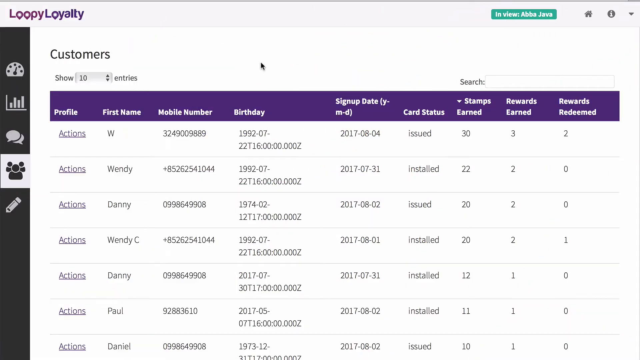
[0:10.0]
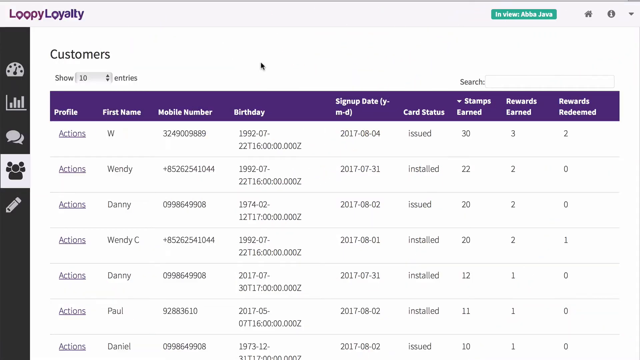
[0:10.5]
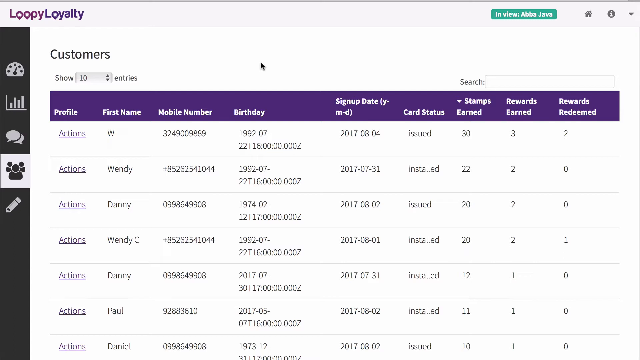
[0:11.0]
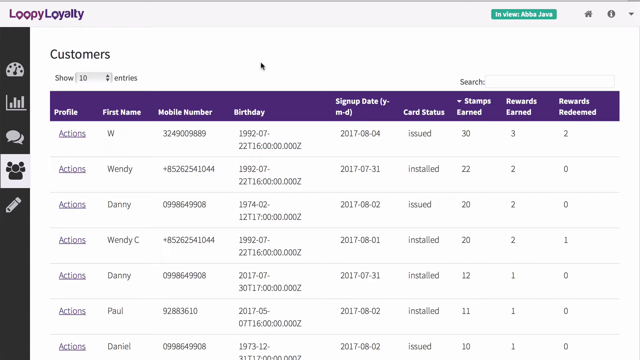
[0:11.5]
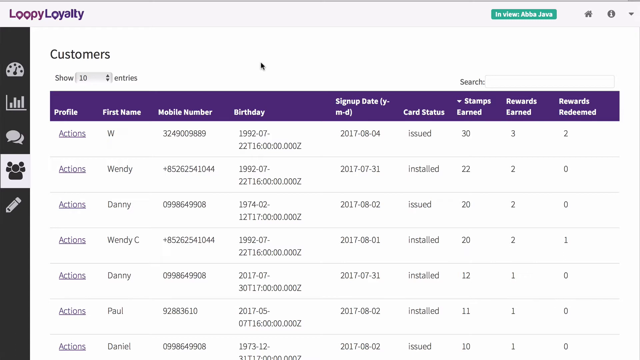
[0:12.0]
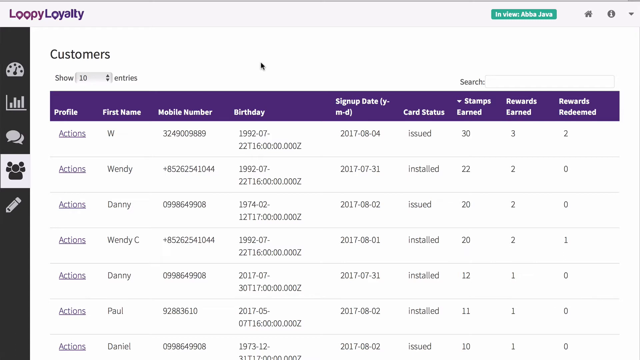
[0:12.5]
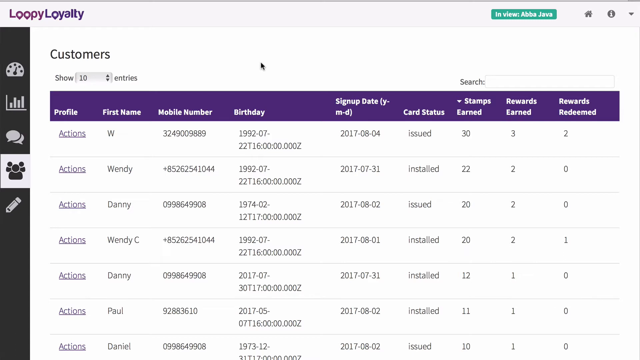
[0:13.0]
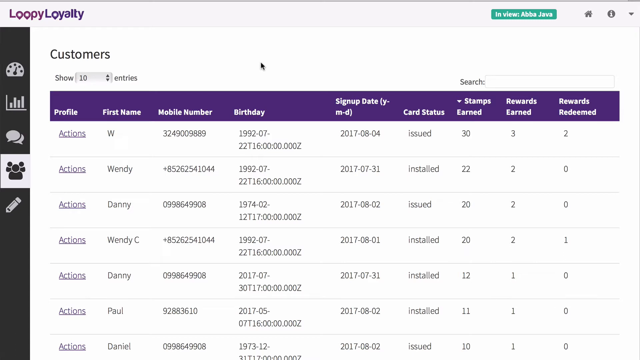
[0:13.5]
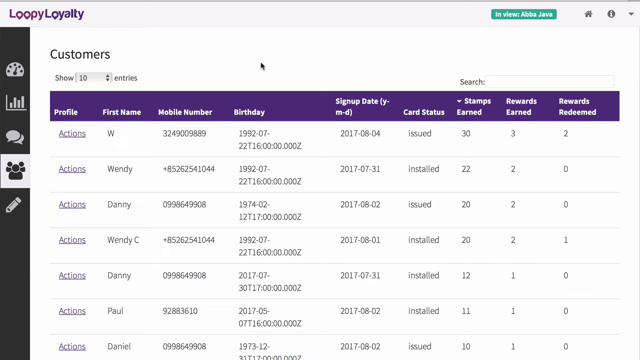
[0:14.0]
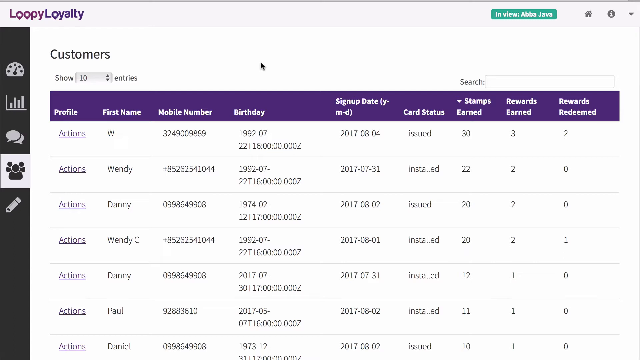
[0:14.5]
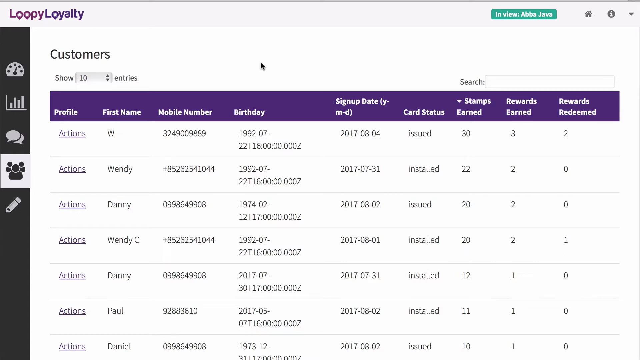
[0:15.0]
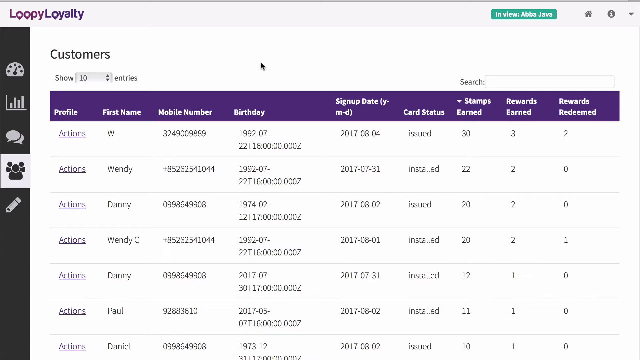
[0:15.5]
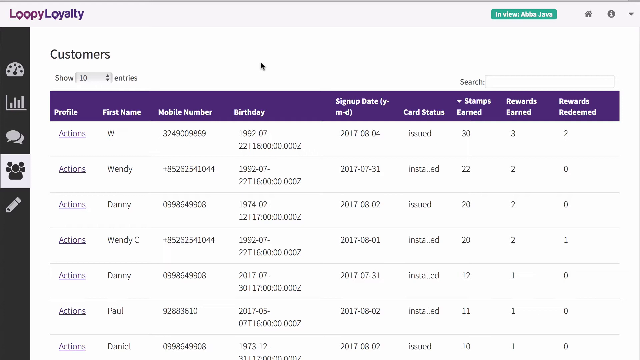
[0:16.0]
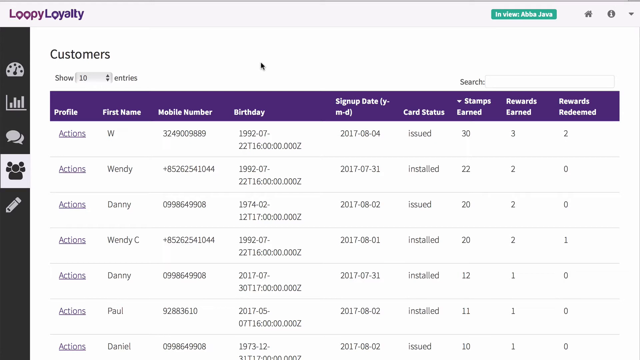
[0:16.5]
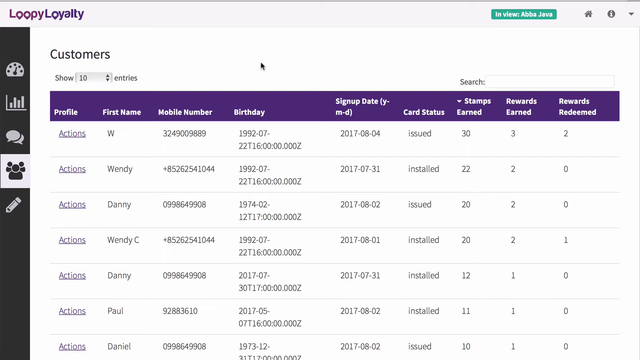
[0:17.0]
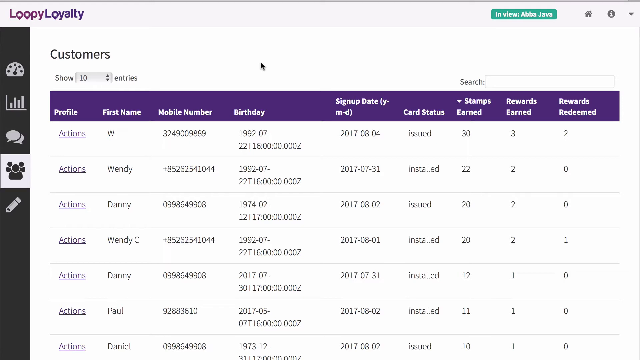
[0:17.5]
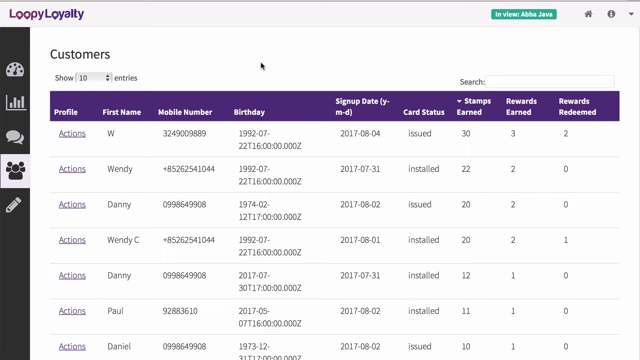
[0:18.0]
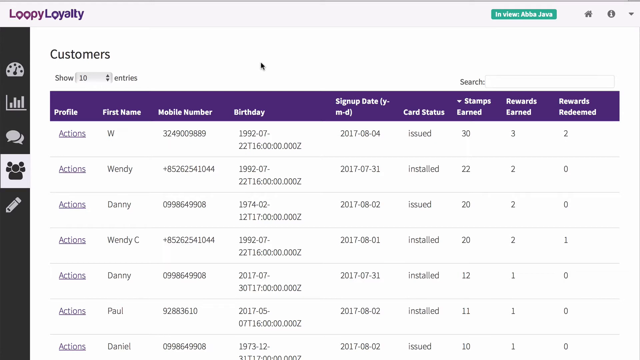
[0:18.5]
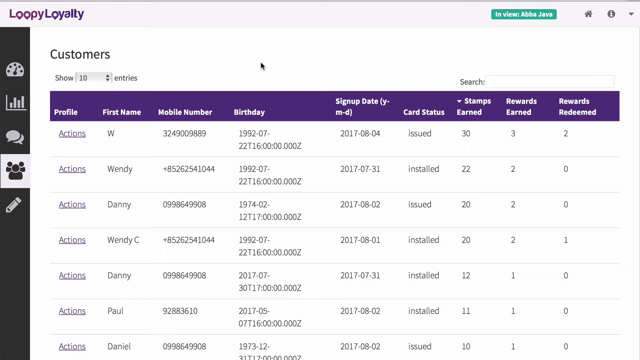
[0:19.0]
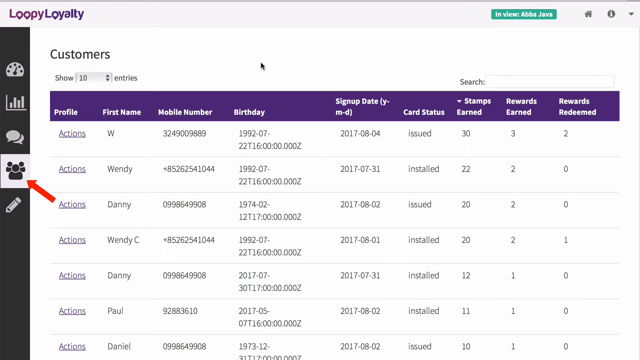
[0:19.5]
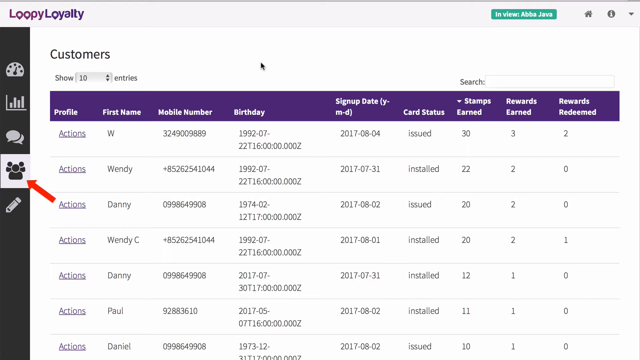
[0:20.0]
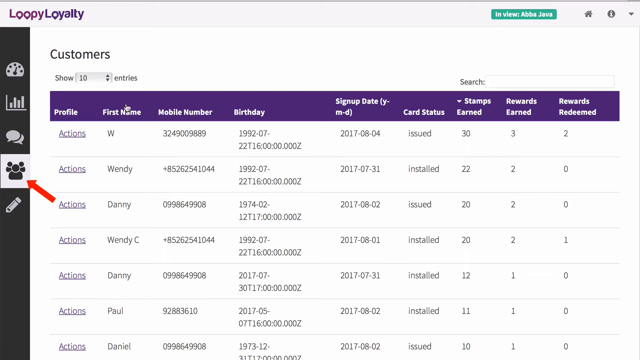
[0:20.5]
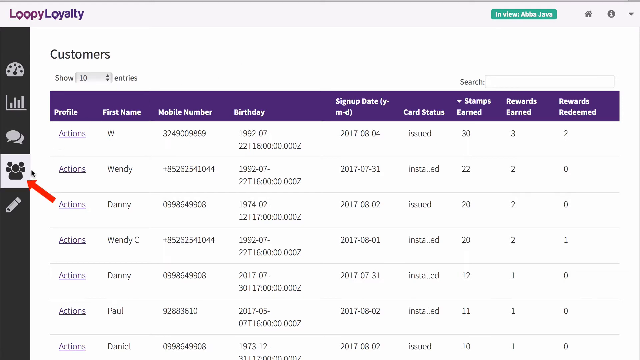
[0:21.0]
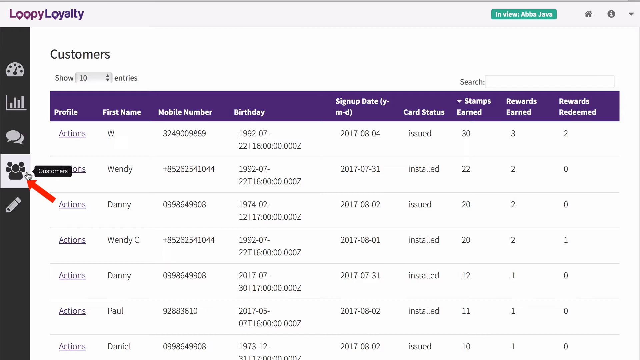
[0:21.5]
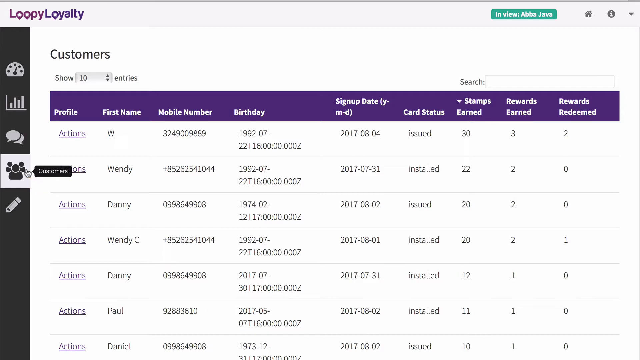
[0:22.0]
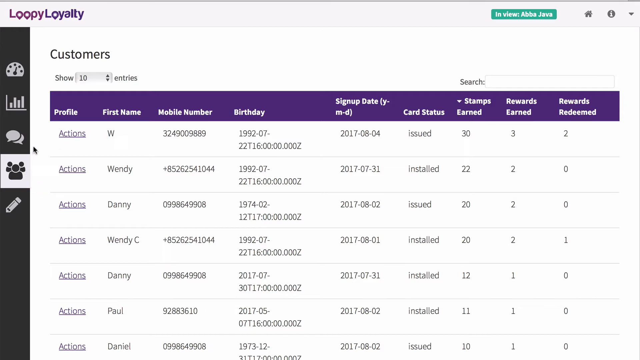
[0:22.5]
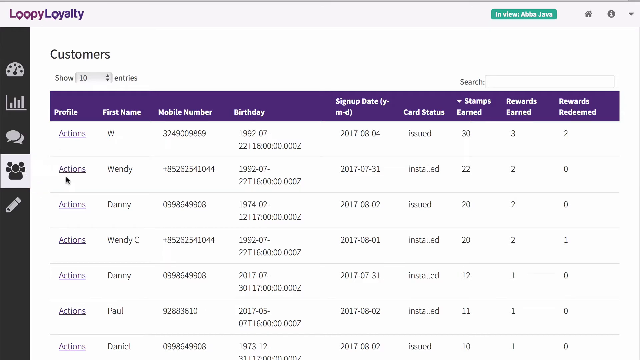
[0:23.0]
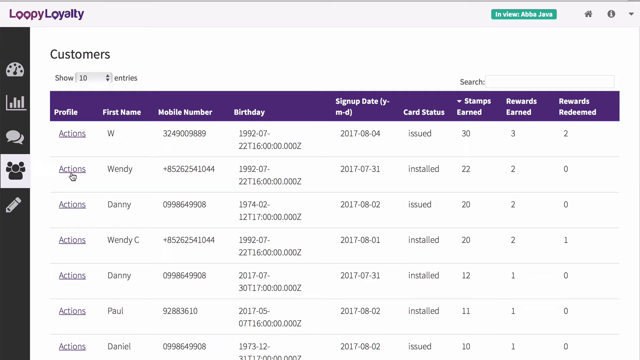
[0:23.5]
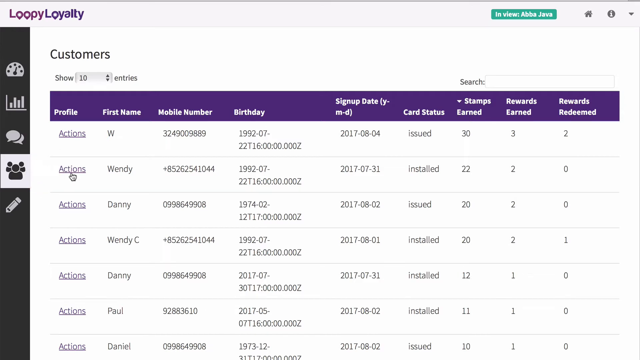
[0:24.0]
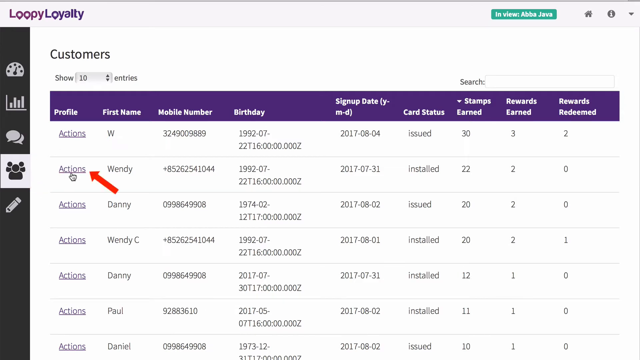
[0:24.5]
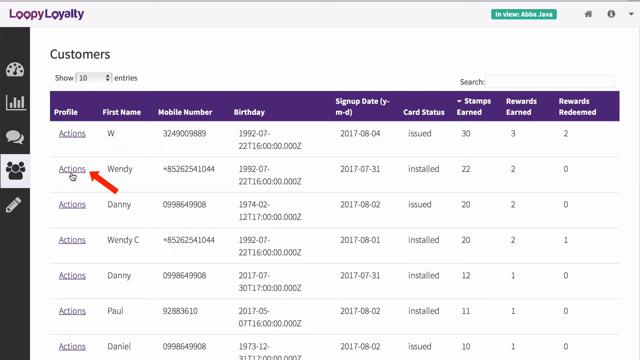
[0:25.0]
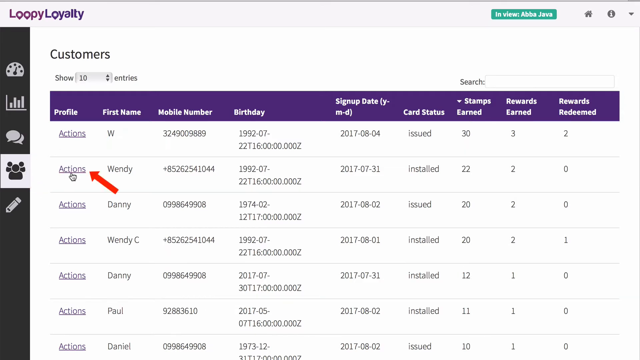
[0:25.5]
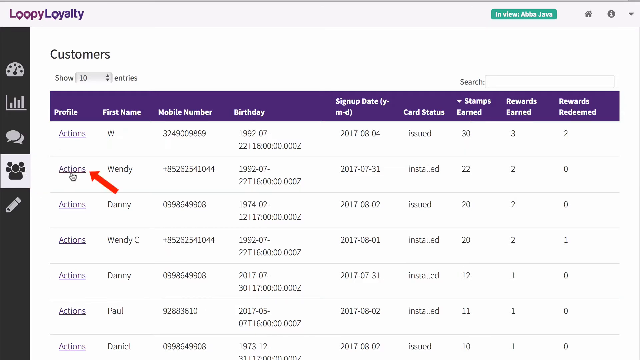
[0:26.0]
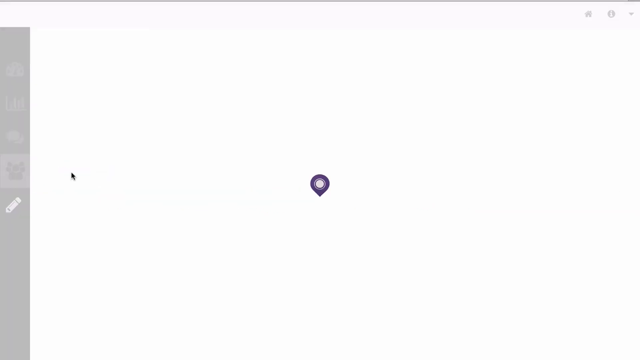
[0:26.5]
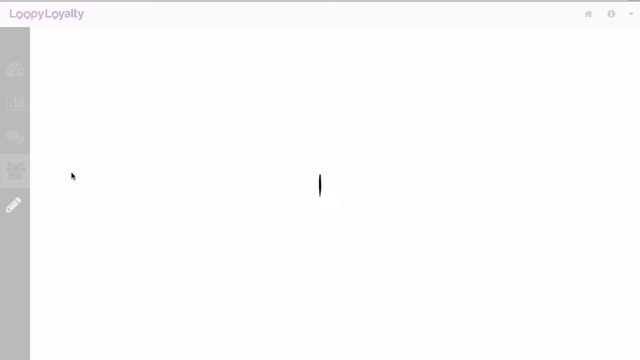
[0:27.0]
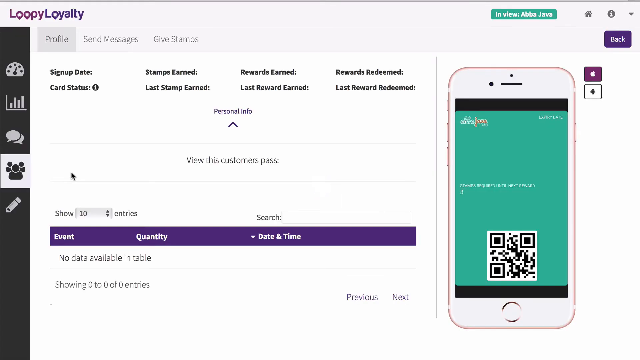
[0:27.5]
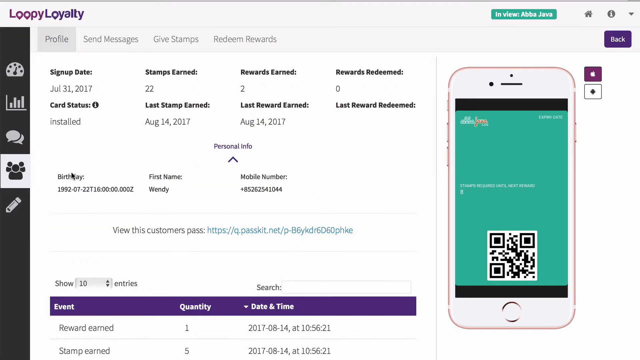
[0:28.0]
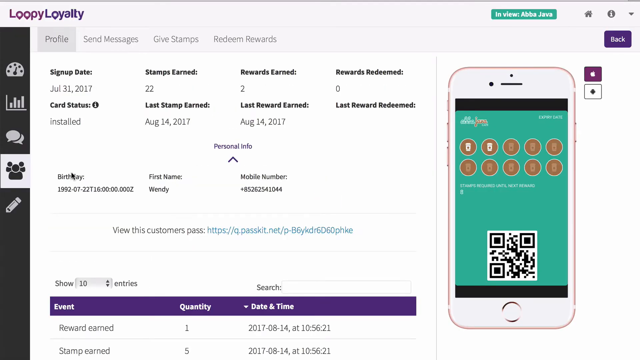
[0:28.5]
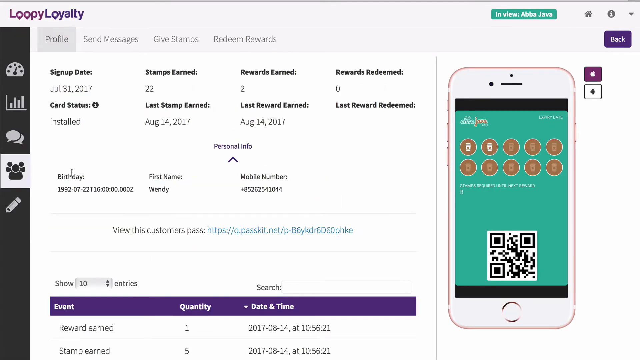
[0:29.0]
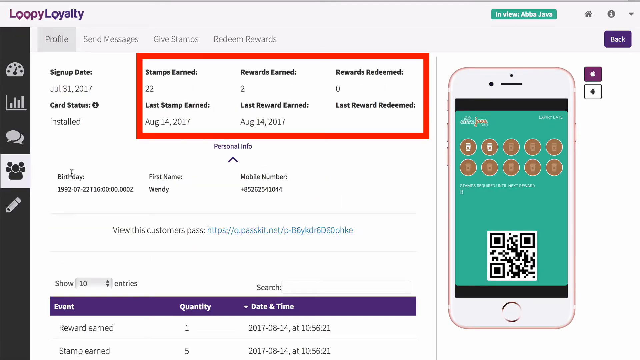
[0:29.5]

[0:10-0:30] A close-up of a web page shows the company brand in purple lettering, "Loopy Loyalty", in the top left-hand corner. Down the sidebar is a grey section with five different icons. A table displays customer information and data, and a purple bar along the top of the table lists profile, first name, mobile number, birthday, sign-up date, card status, stamps earned, rewards earned and rewards redeemed. For most of the shot the page is still, but then a red arrow appears on the left-hand side pointing to a group-of-people icon, and the black arrow mouse cursor clicks on it. The cursor then clicks on the actions of the second person down, and again a red arrow appears. The page changes to a profile page showing that customer's profile details, with each of the table sections outlined in more detail. On the right-hand side is an image of a mobile phone with a red outline, a green screen and red logos on the screen.